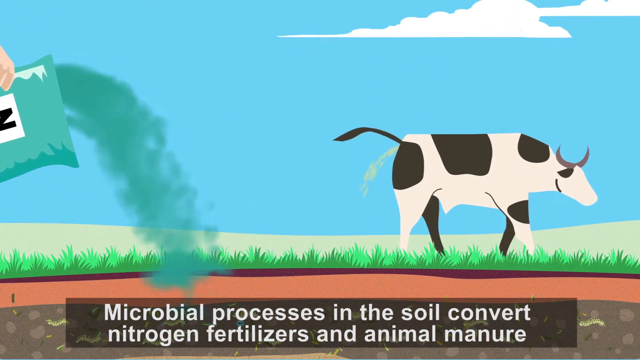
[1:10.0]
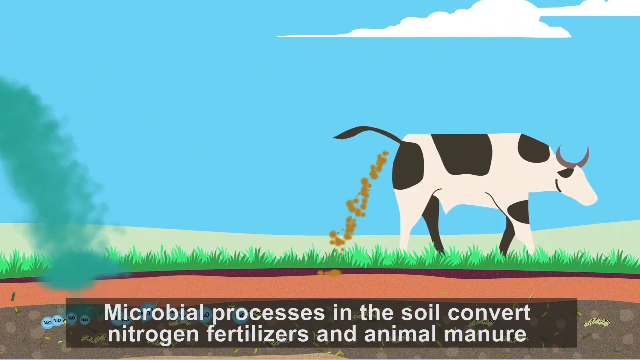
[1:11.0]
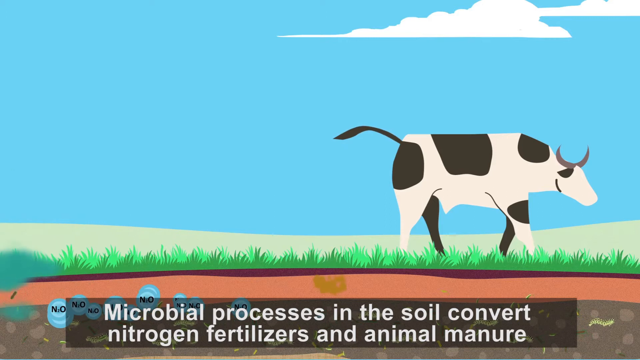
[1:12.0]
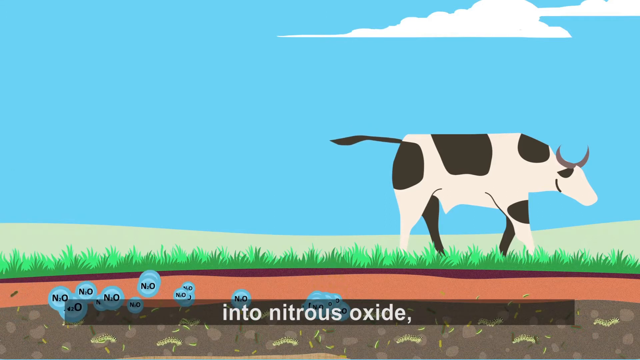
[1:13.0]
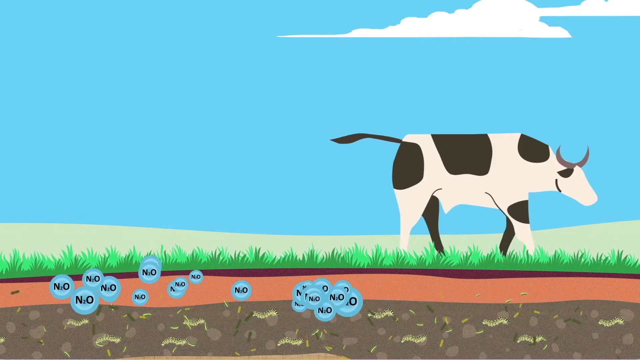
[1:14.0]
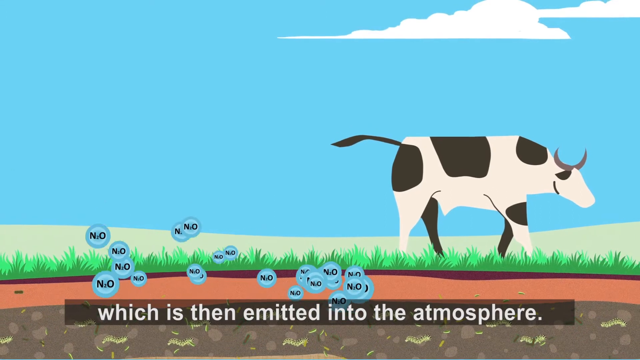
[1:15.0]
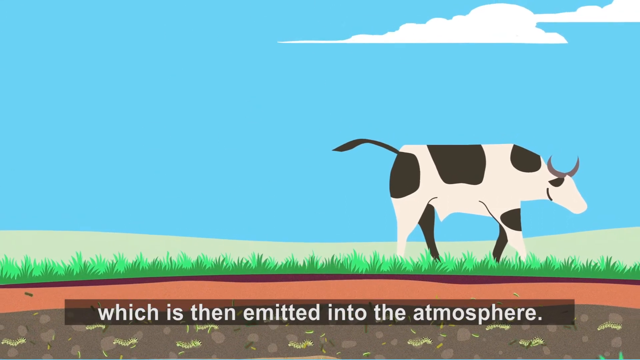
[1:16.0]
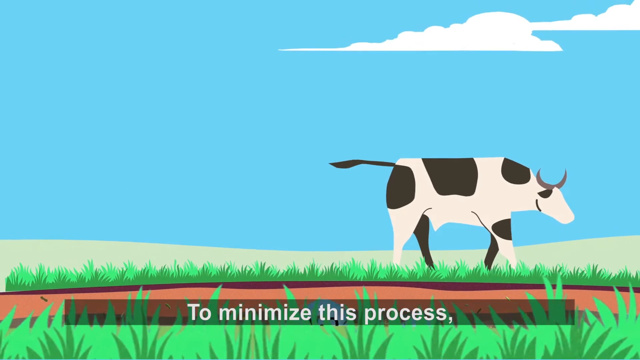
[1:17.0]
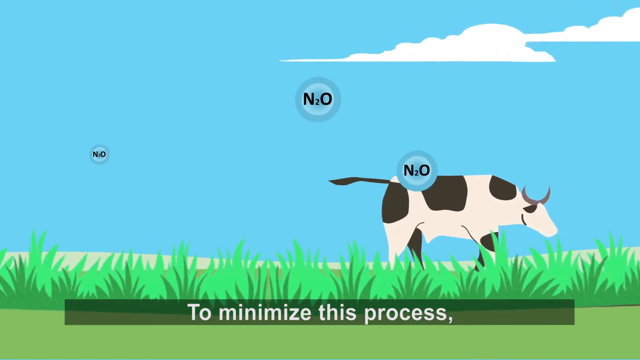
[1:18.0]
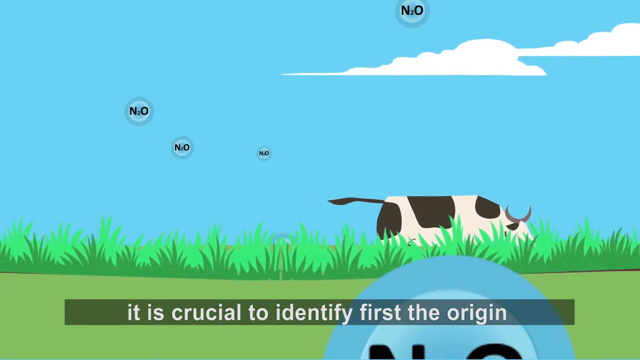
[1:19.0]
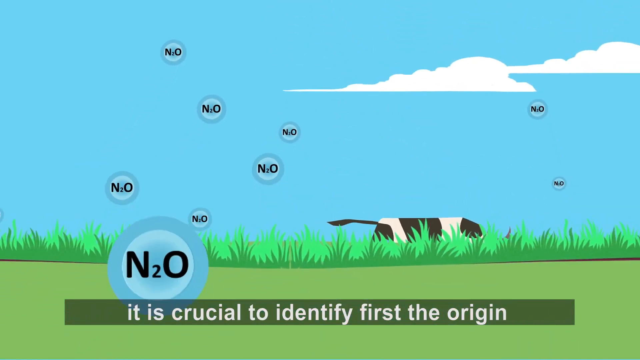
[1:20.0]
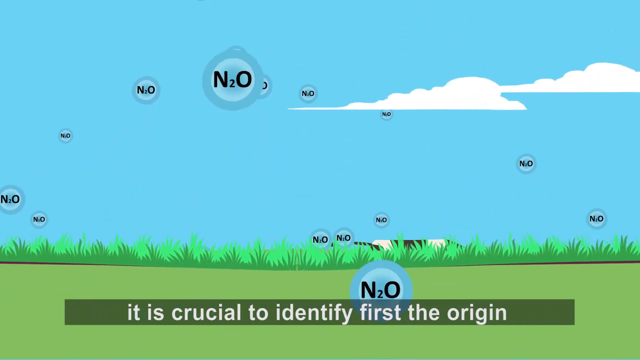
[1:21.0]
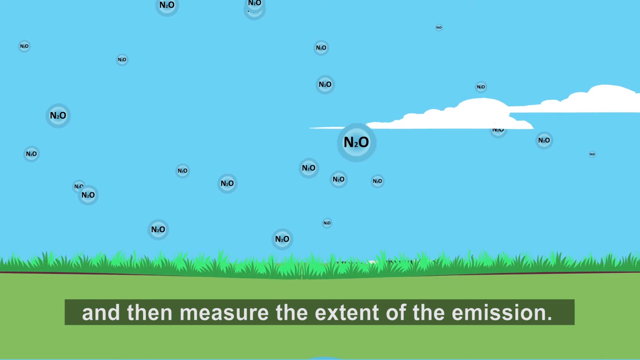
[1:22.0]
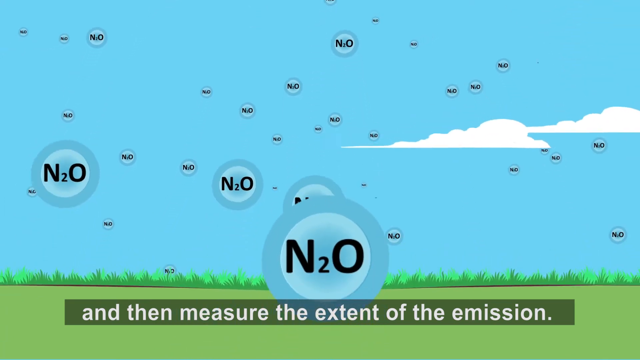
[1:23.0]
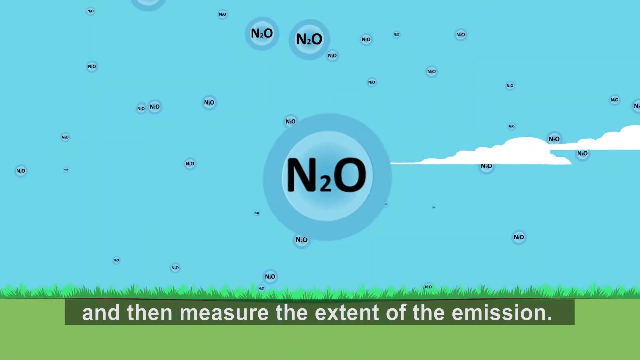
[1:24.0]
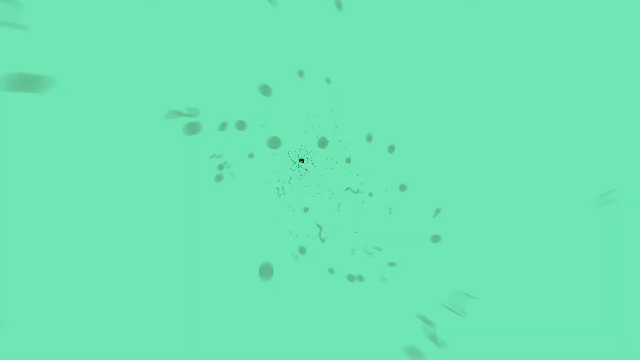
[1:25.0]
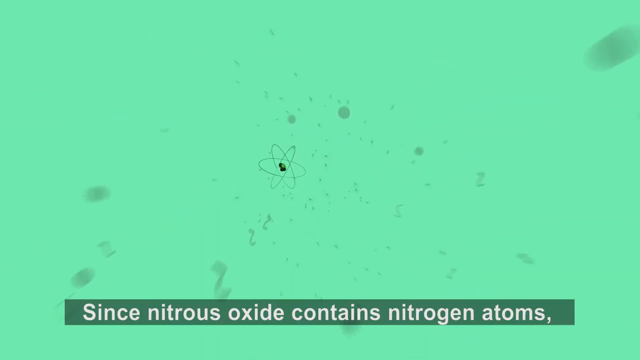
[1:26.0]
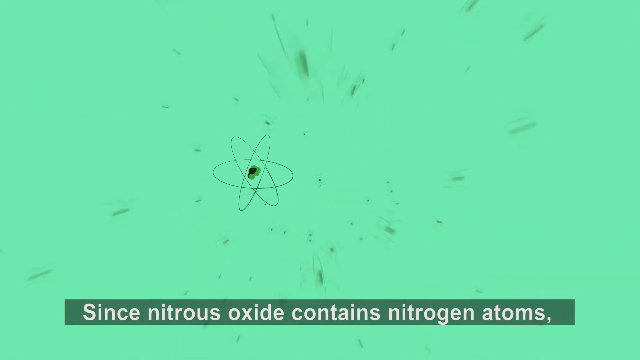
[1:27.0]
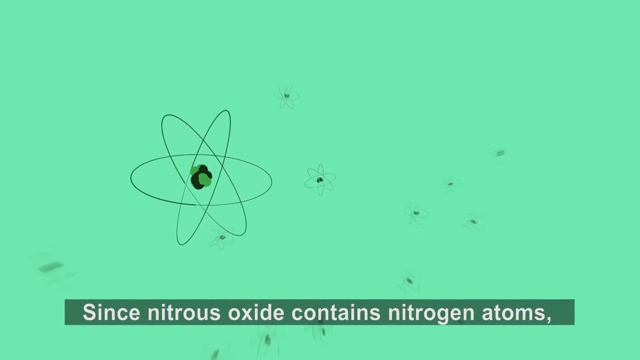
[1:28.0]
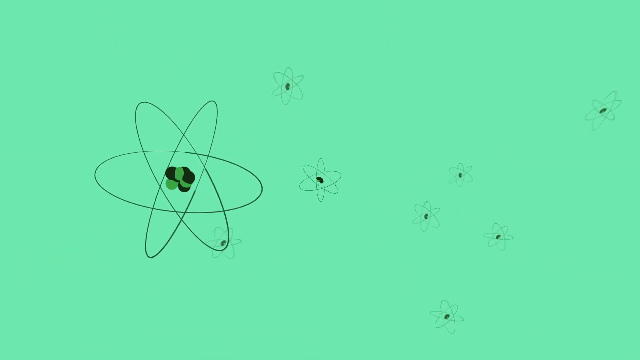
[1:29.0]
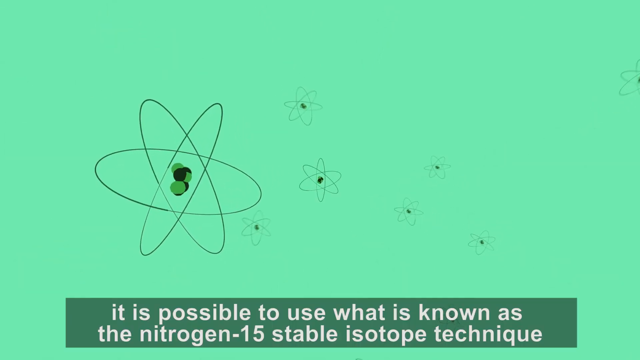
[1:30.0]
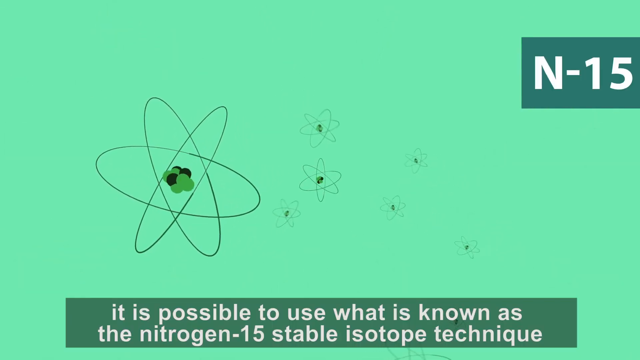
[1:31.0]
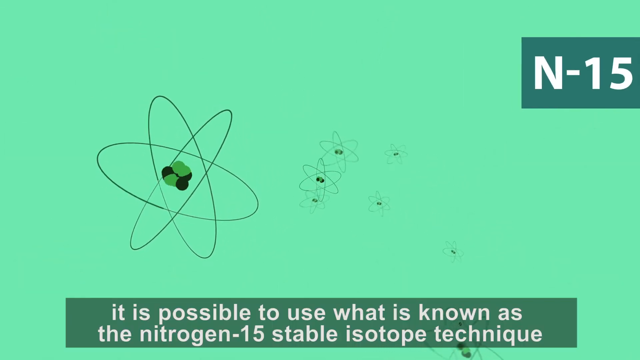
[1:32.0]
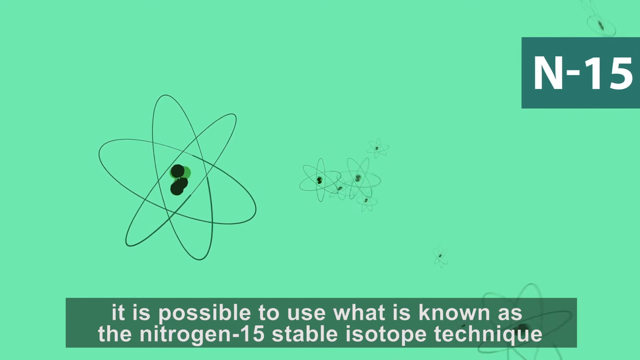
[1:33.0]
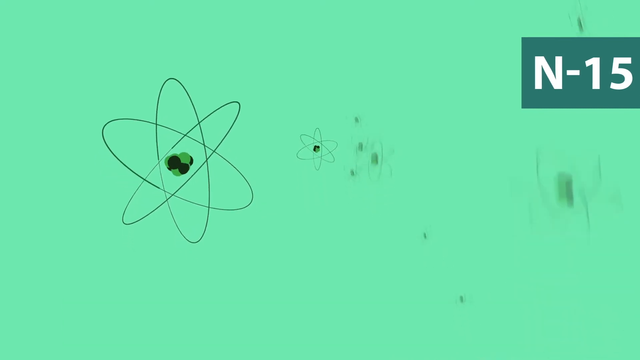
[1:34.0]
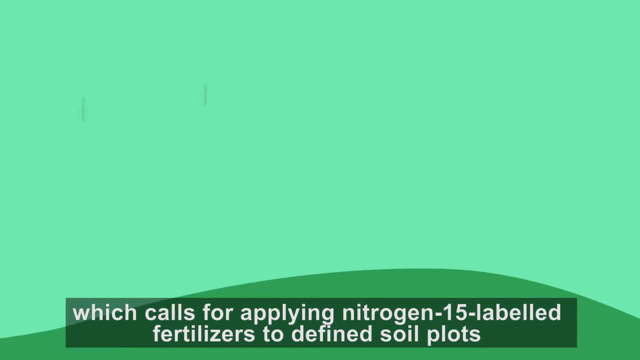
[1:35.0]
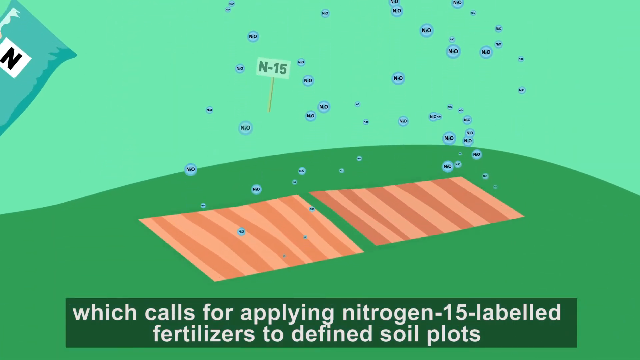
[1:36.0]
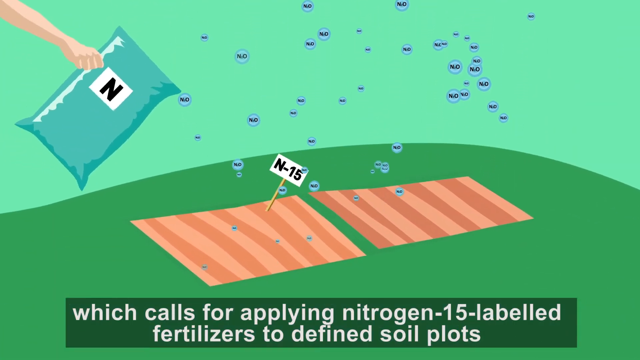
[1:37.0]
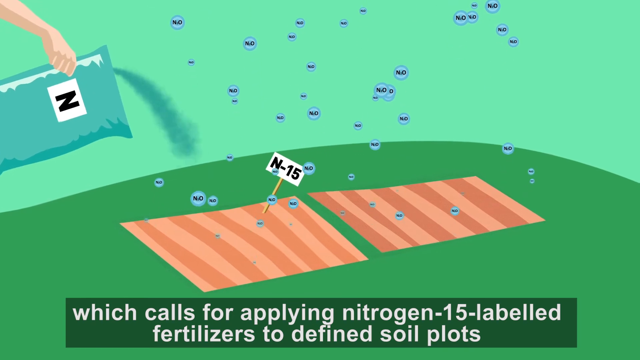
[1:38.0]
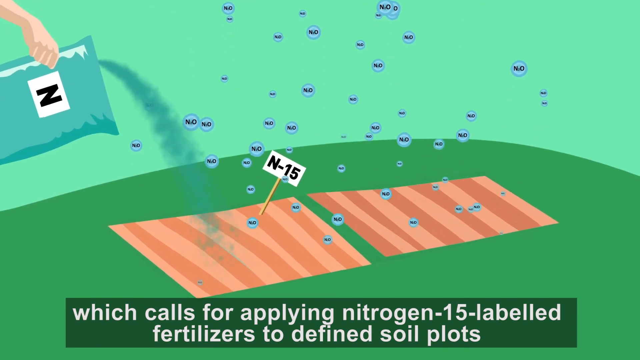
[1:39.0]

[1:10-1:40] The animation appears to show someone pouring from a green bag, possibly fertilizer. Text reads "To minimize this process, it is crucial to identify first the origin and then measure the extent of the emission." As this appears, the N2O circle gets bigger. Further text states that nitrogen oxide contains nitrogen atoms and reads "It is possible to use what is known as nitrogen 15 stable isotope technique".